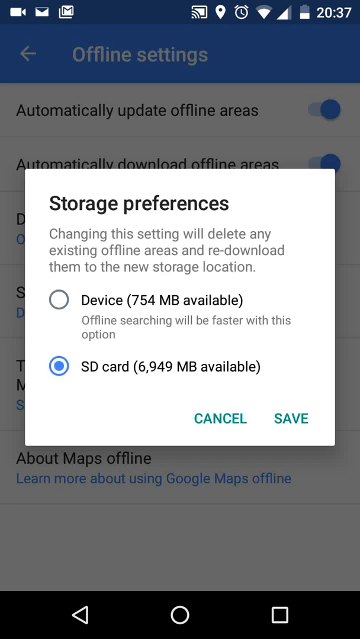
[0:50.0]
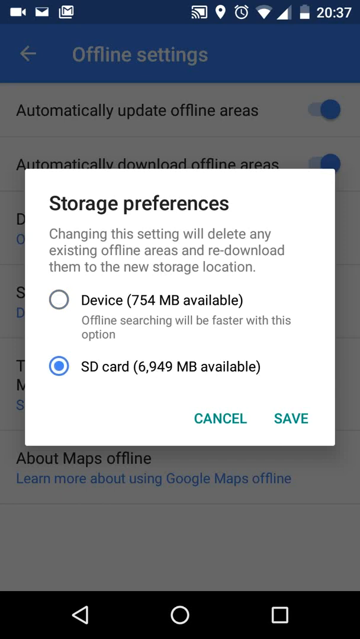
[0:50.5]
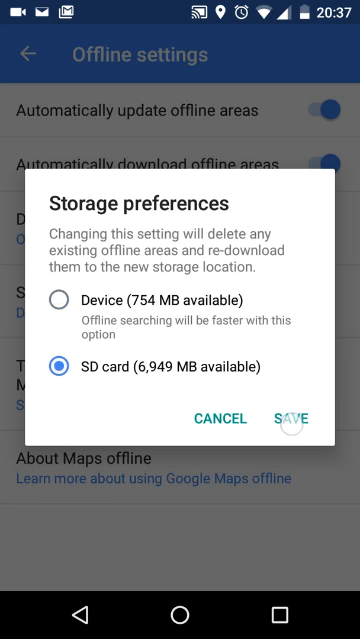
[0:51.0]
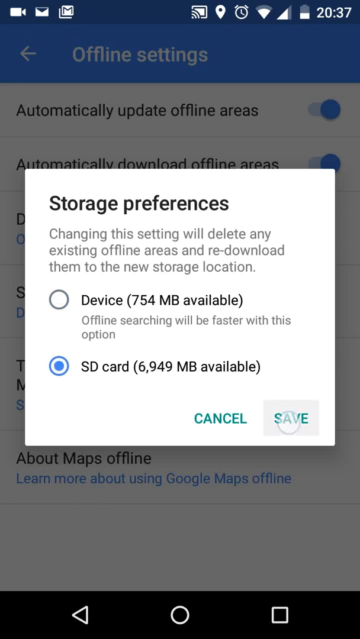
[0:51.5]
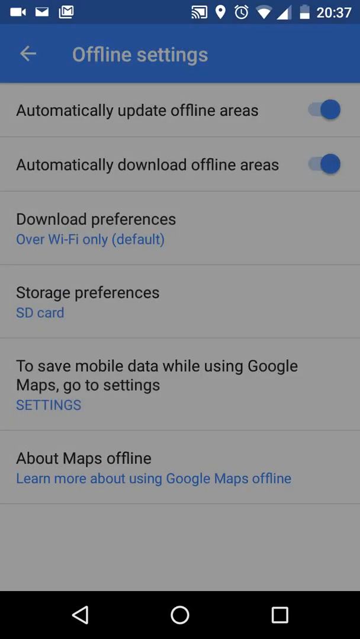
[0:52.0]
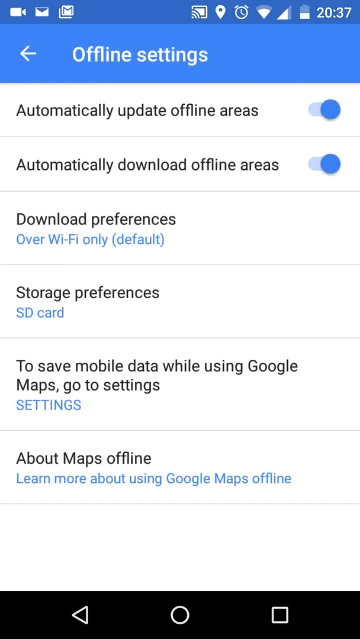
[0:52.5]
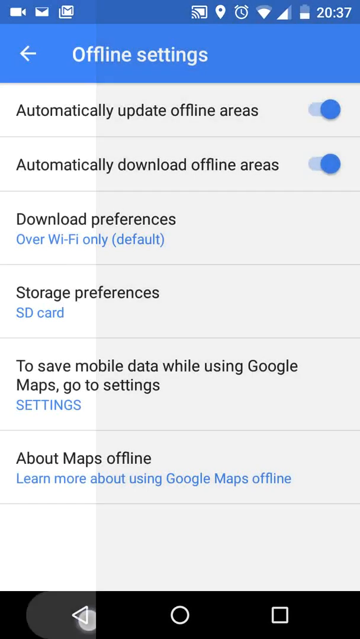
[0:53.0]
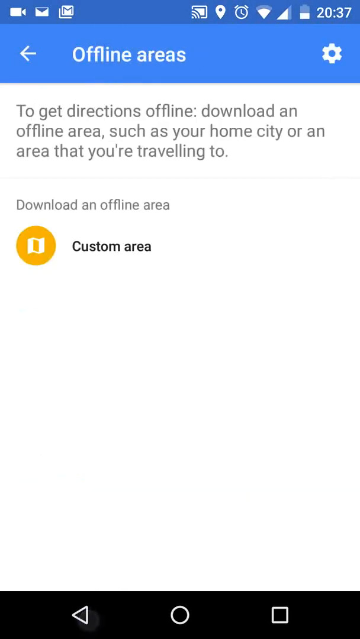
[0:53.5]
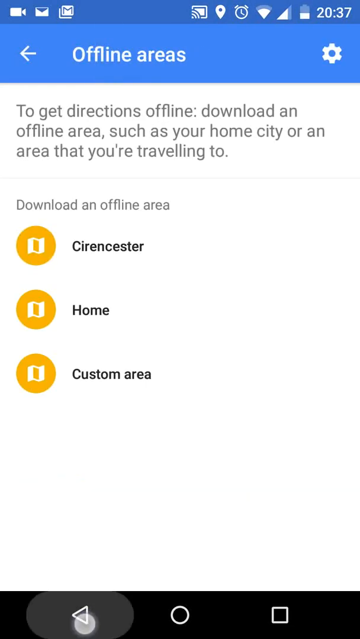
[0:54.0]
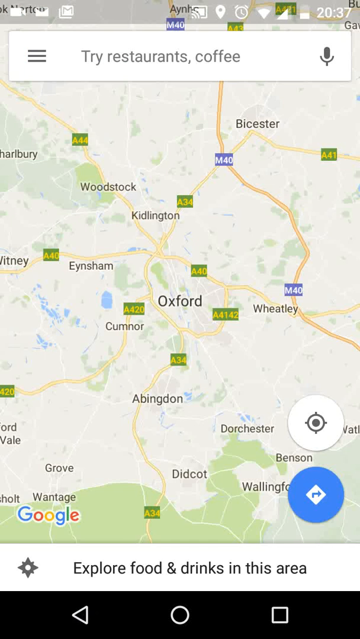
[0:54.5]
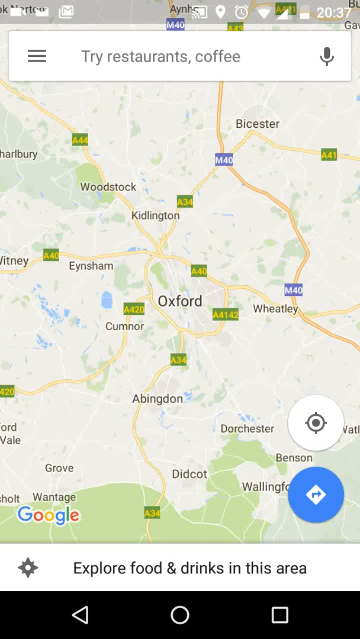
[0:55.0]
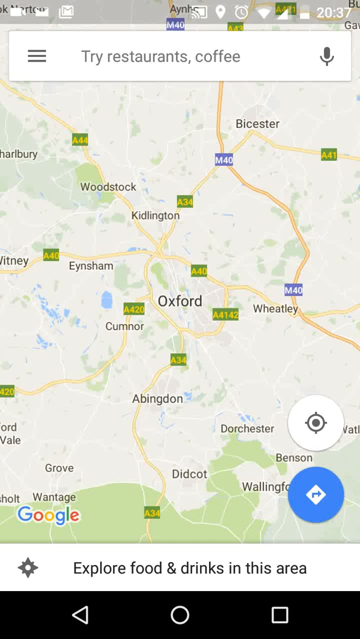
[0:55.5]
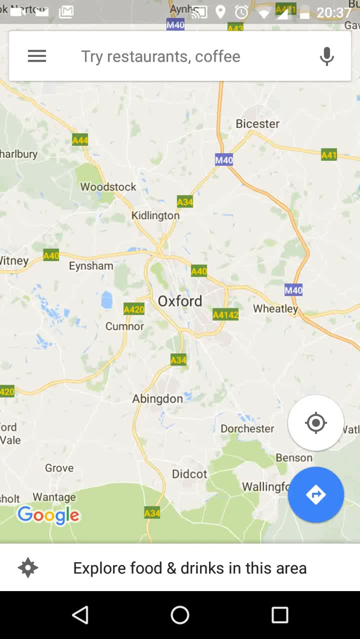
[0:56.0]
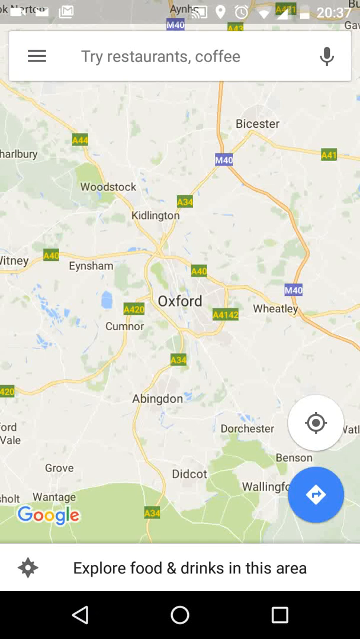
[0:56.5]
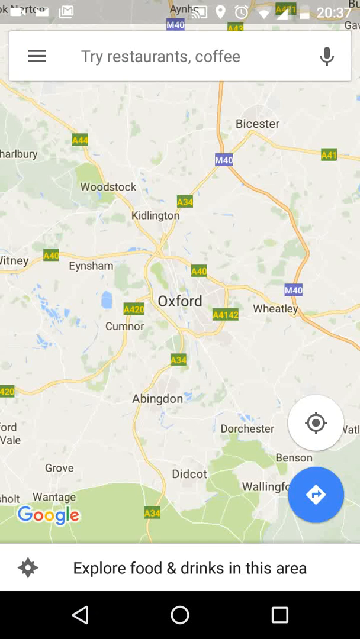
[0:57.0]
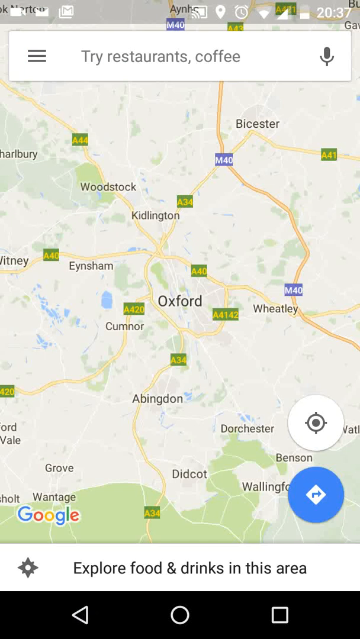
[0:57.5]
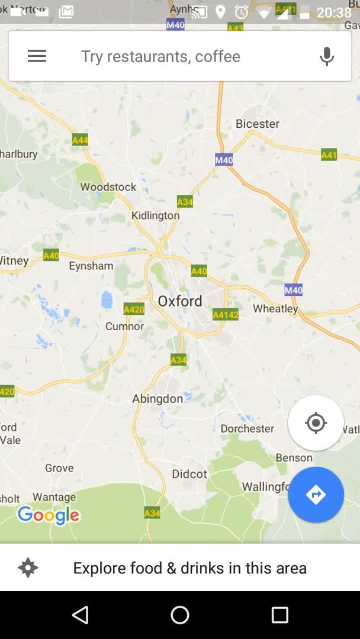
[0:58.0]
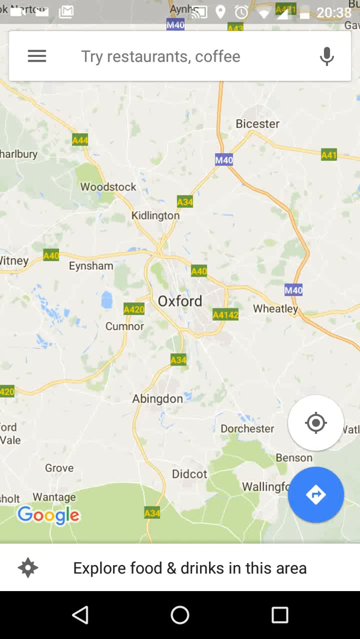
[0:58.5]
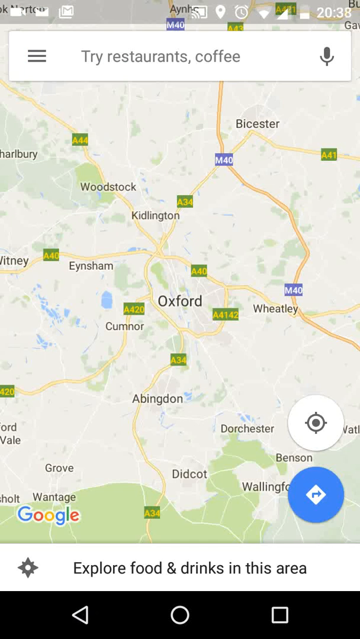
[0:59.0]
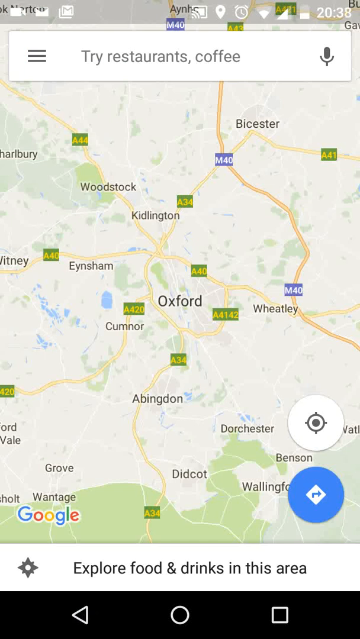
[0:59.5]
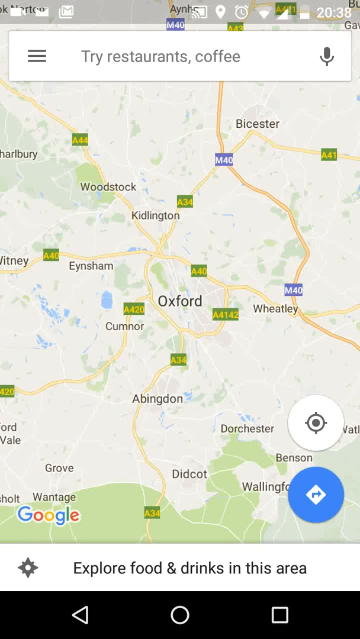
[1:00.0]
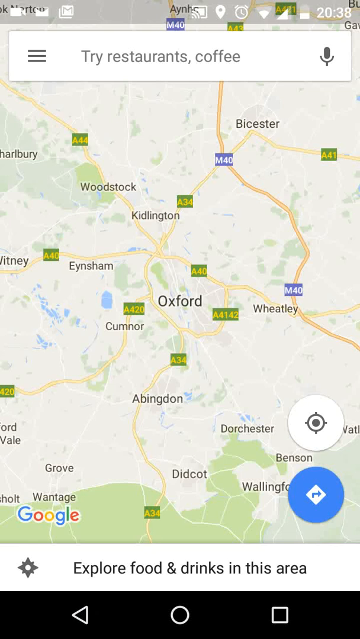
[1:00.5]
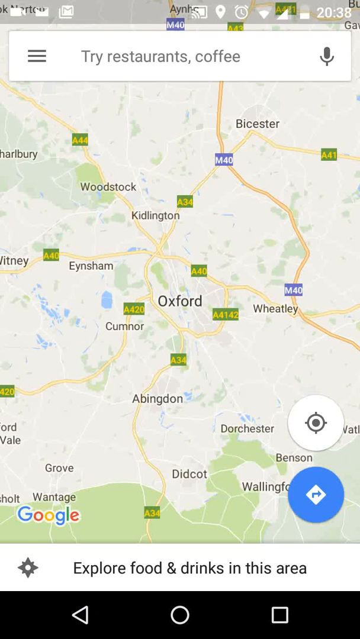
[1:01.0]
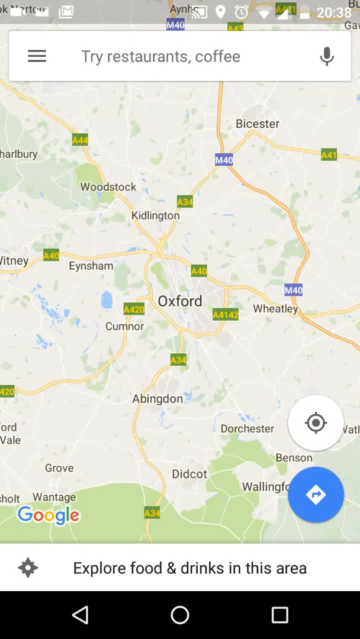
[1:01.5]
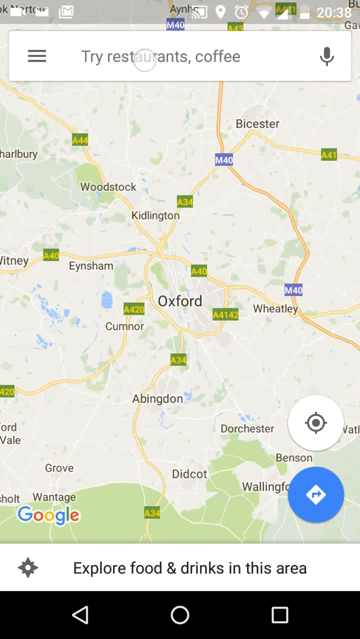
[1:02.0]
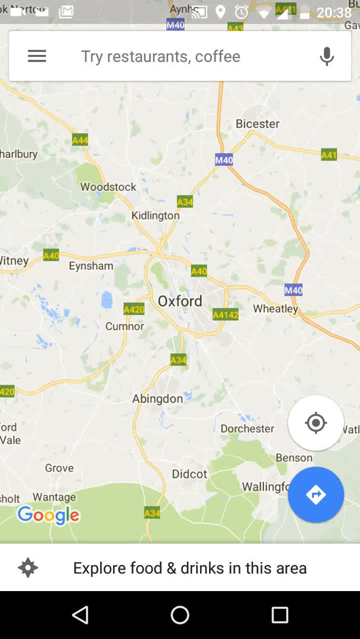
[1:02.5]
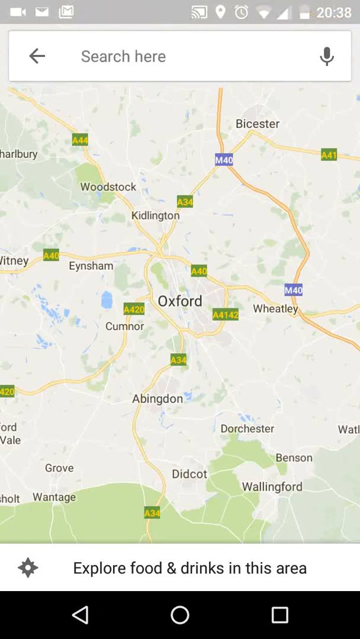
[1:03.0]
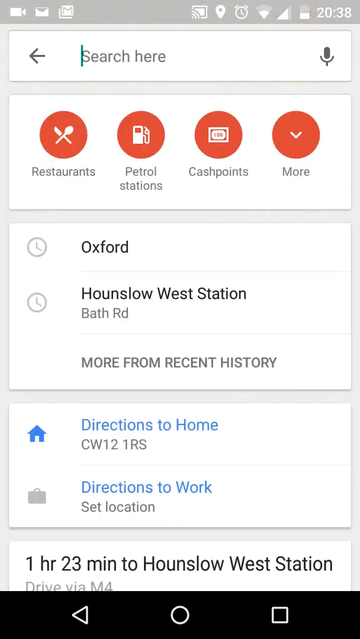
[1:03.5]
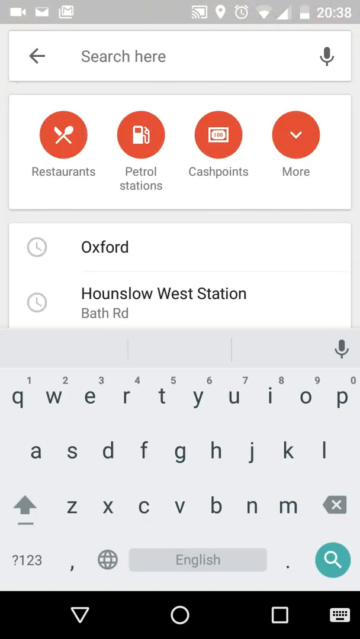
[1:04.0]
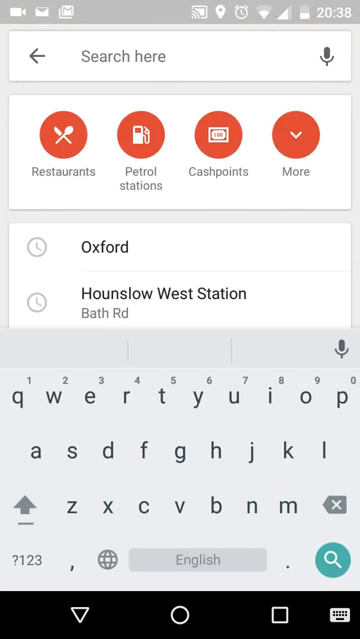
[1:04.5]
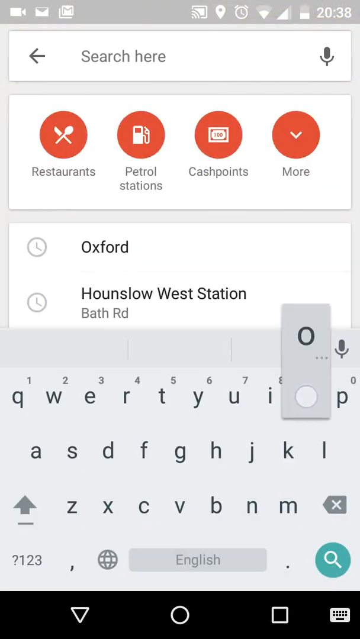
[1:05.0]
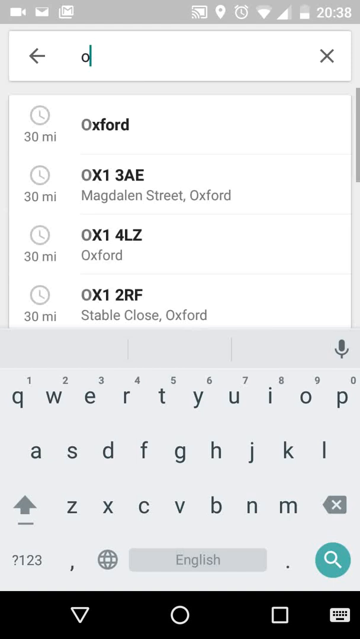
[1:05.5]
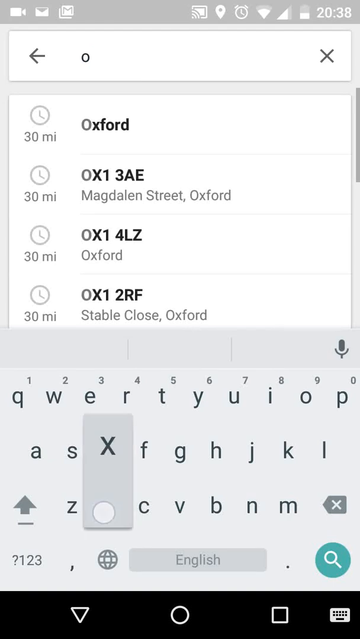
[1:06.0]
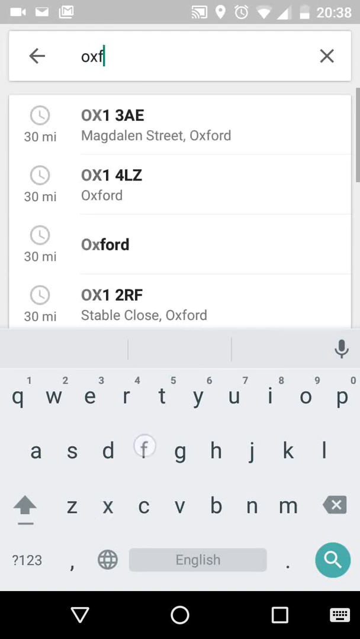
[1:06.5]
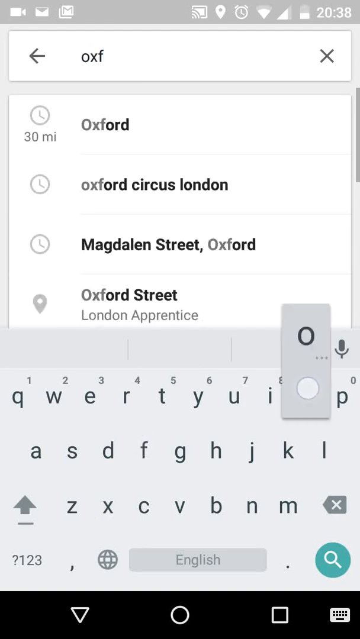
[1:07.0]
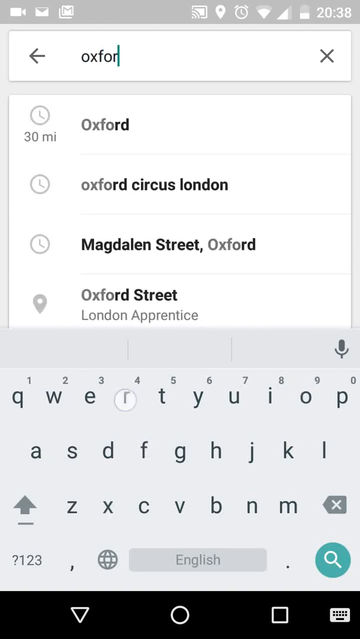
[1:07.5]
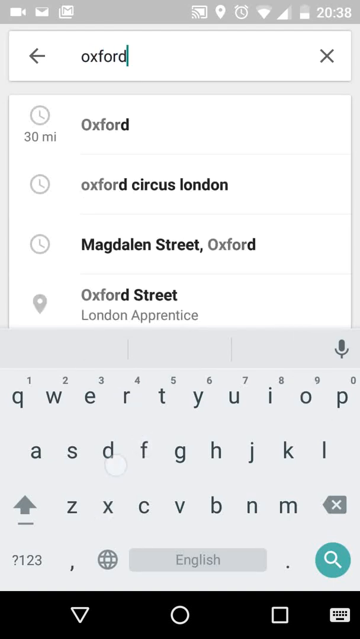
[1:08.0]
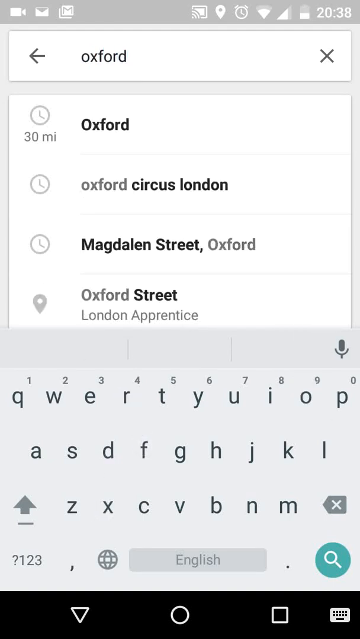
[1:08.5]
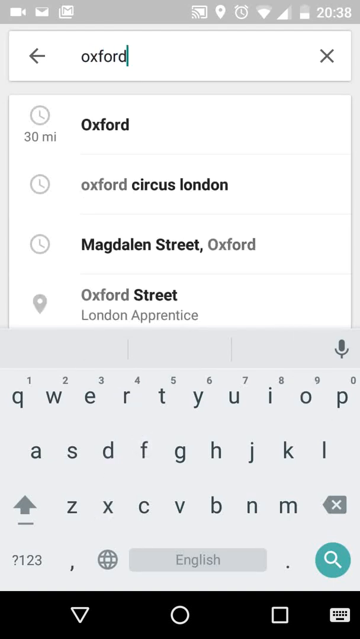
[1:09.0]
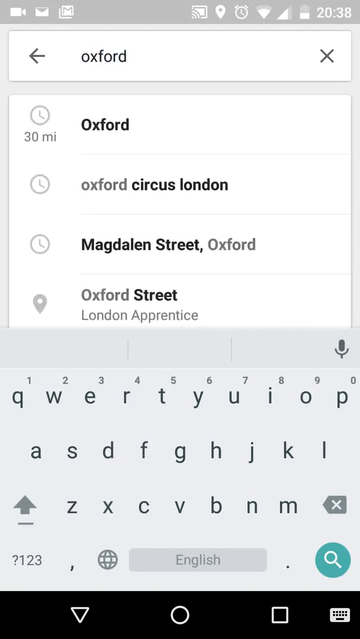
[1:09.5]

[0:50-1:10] A white storage preferences box is centered over the offline settings, which look dimmed behind it. At the bottom right of the box are "cancel" in teal and "save" to its right. He taps save and returns to the offline settings with the slider buttons, then backs out a couple of pages to the restaurant coffee map. Some roads are in yellow, and there are a purple box and a green box with numbers on them. At the bottom right is a white compass, and underneath it a blue circle for getting a route. He starts a search and types "O", and a list of places starting with O appears, including Oxford with "0x138E", apparently an address or code, and the distance to each place shown to the left. As he types Oxford on the keyboard at the bottom, each pressed letter pops up out of the keyboard.